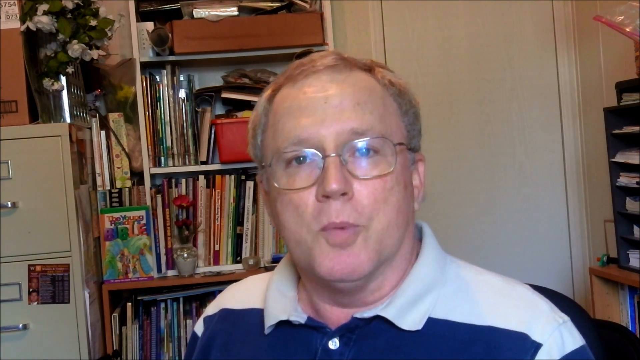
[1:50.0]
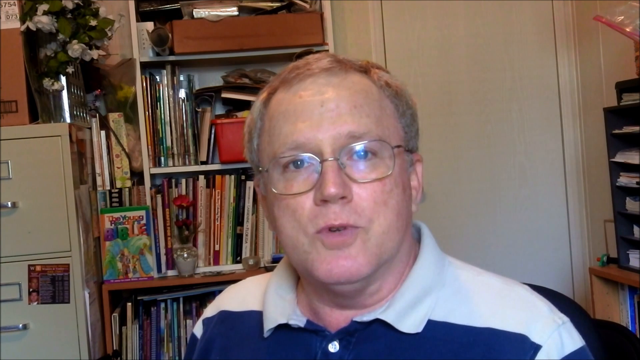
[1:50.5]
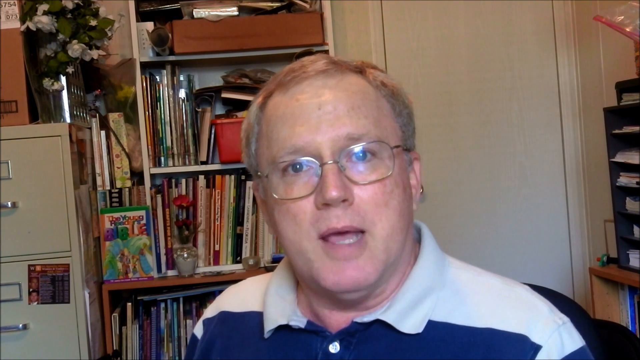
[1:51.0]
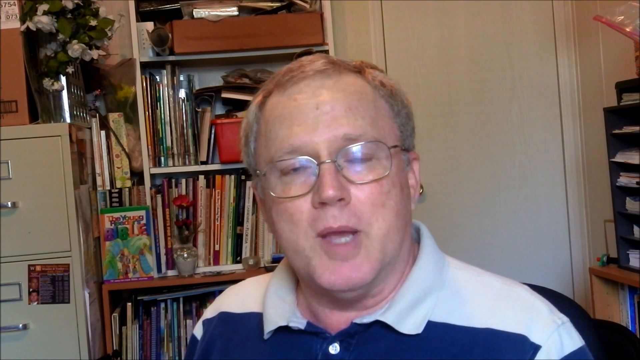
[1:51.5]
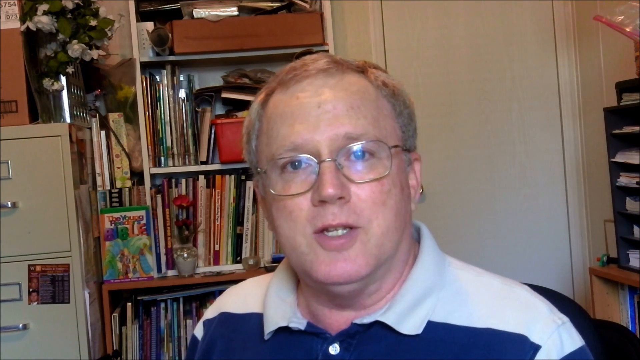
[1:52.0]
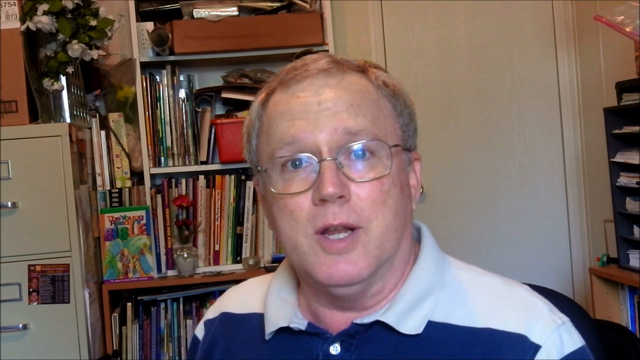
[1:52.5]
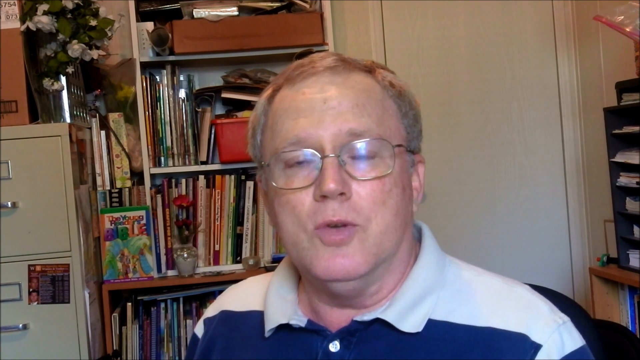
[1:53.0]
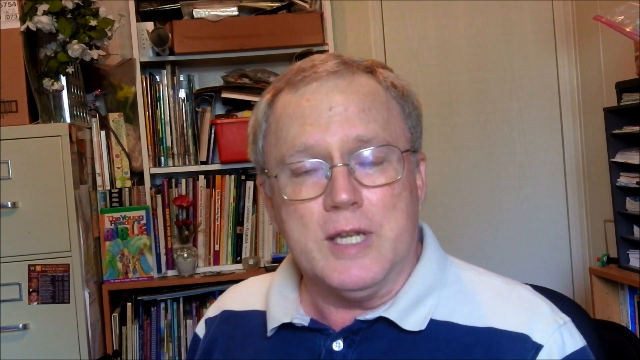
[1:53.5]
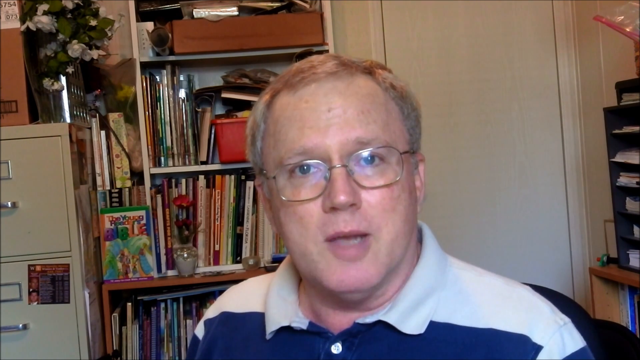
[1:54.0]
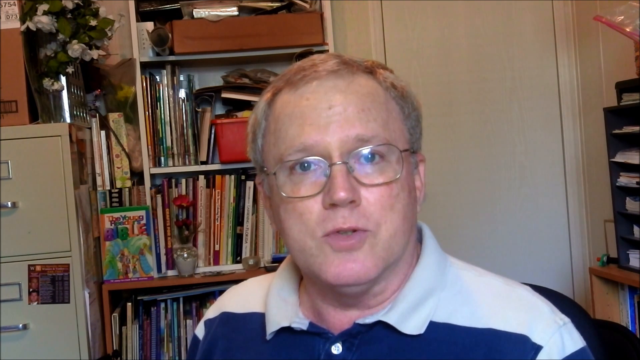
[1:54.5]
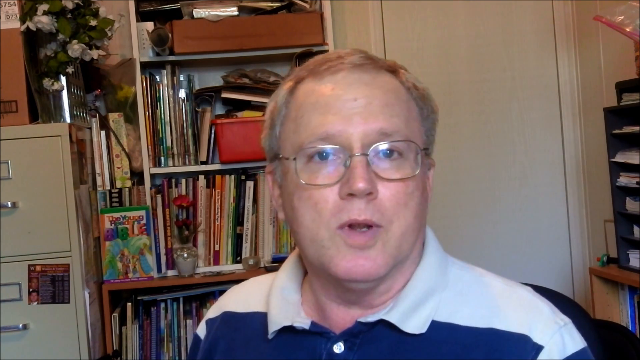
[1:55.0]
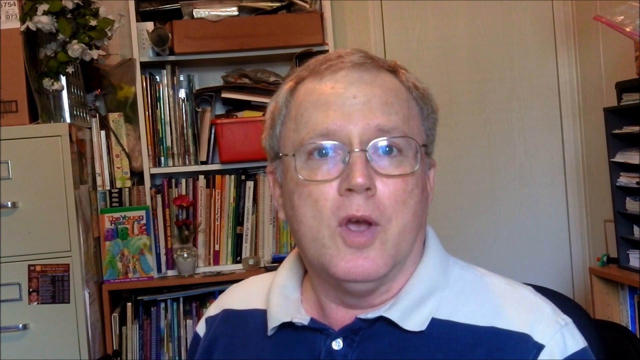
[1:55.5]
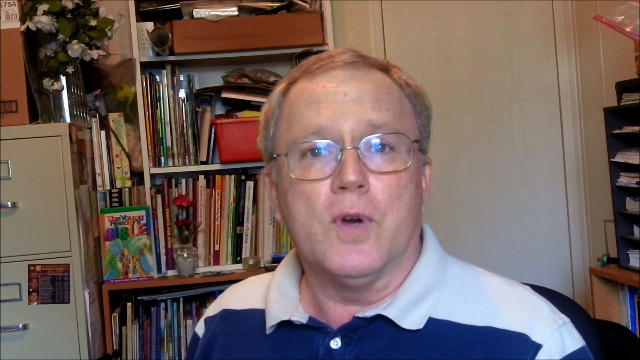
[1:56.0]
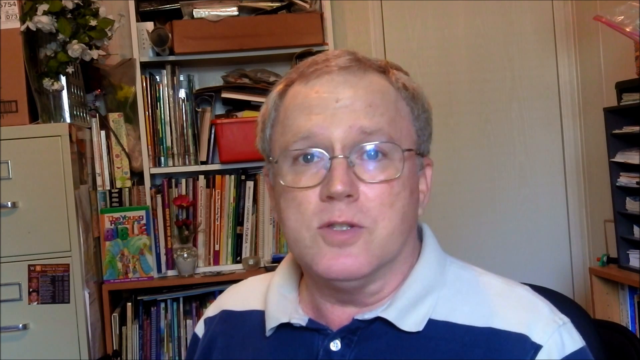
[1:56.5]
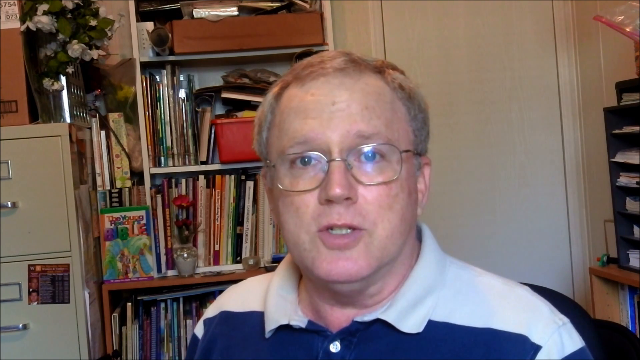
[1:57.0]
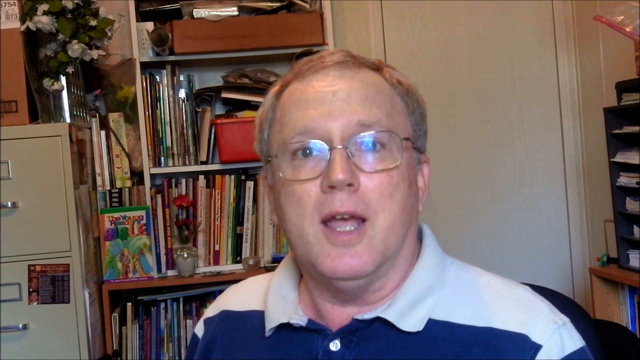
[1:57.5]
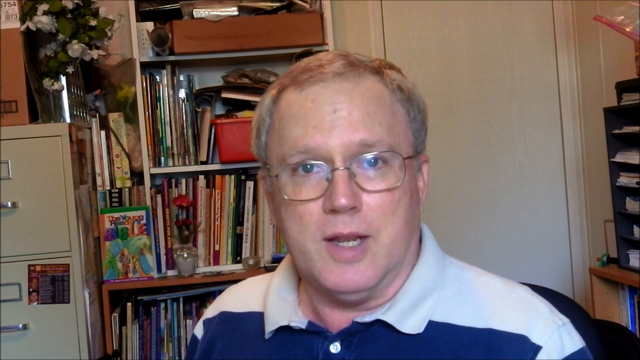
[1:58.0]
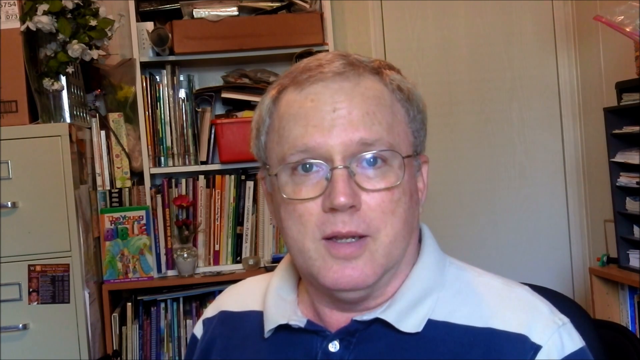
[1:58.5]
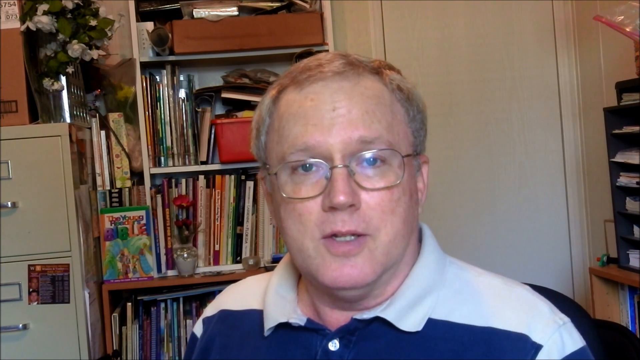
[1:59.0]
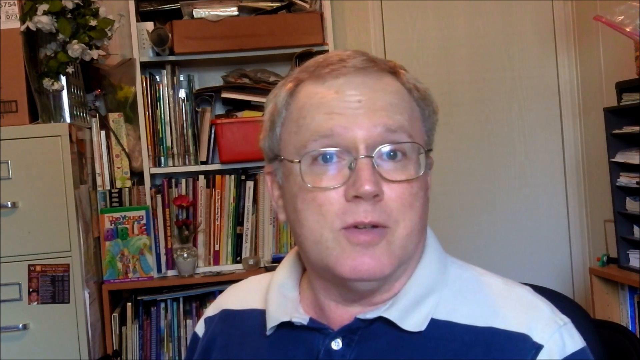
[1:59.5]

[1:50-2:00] A man who appears to be in his 60s sits in the center of the frame wearing a black and white striped polo shirt. His head is tilted slightly to the left, and he is sitting in a black computer chair with an unkempt, cluttered office behind him that includes a file cabinet and a bookshelf lined with books lying sideways among other items. He appears to be in a small office with overhead lighting, as there is a glare on the top of his wire-rimmed glasses. As he speaks, his eyes widen slightly and his eyebrows occasionally lift. He moves his head very slightly and appears to speak slowly, accentuating some words as the muscles at the side of his face tighten and relax. He appears knowledgeable and seems to be instructing the viewer. He does not move from his seated position.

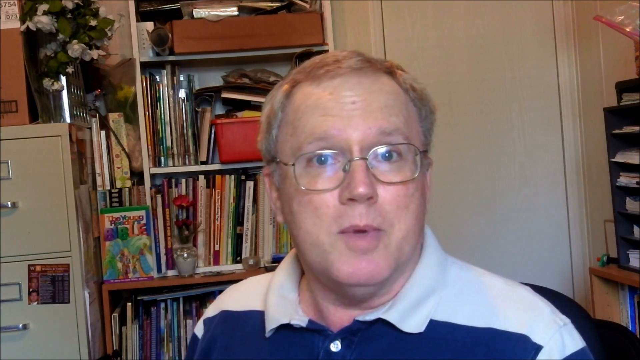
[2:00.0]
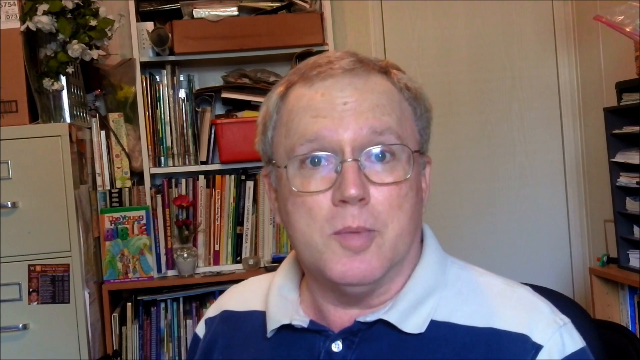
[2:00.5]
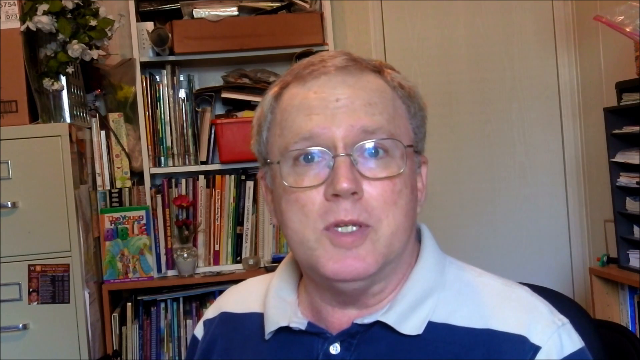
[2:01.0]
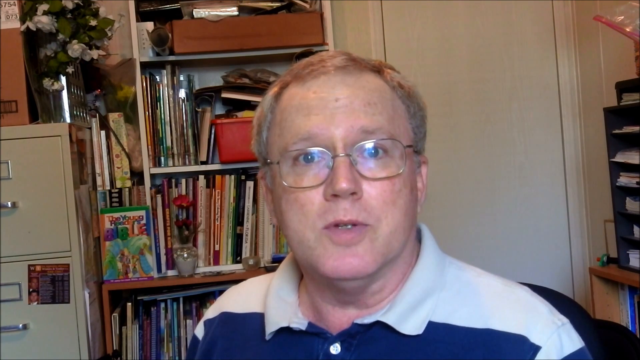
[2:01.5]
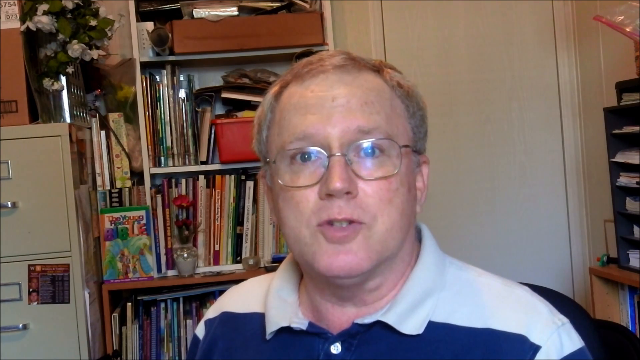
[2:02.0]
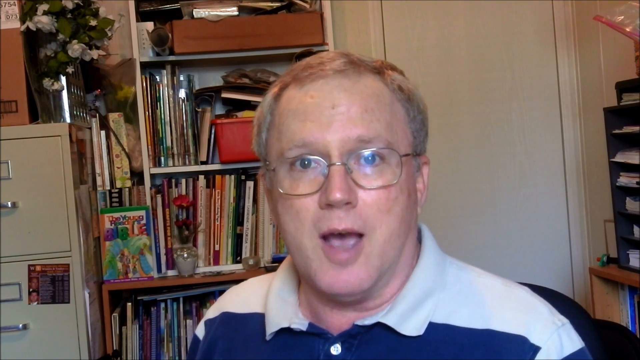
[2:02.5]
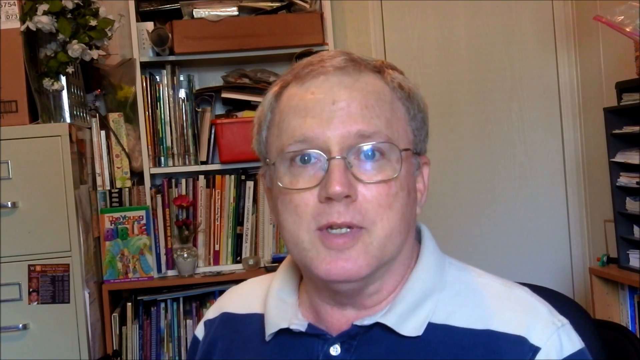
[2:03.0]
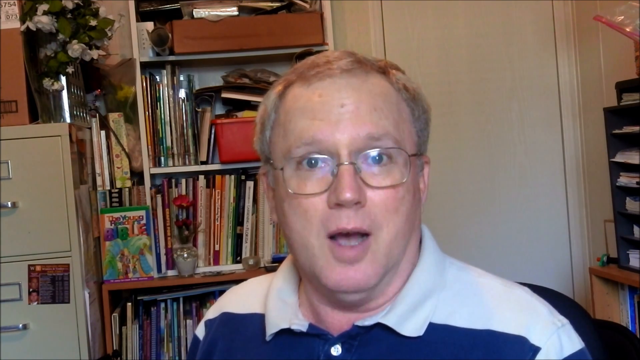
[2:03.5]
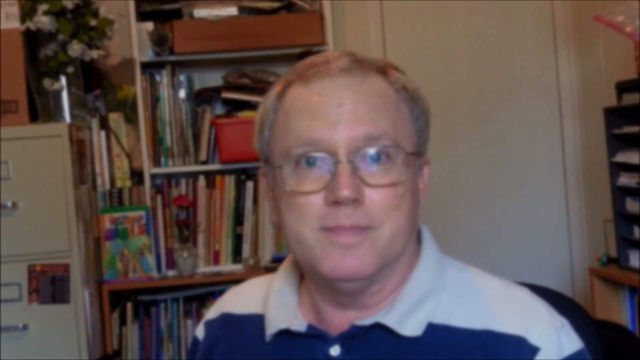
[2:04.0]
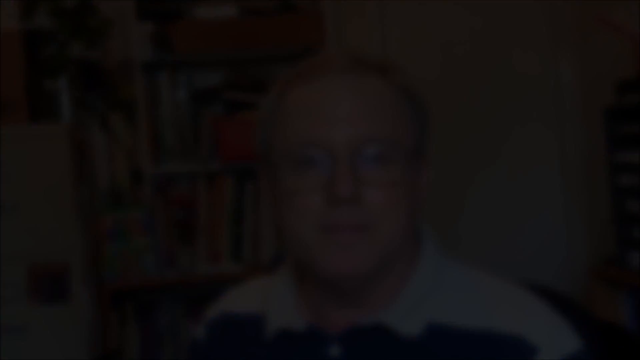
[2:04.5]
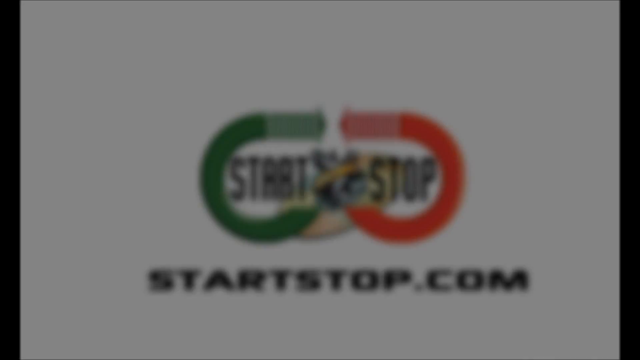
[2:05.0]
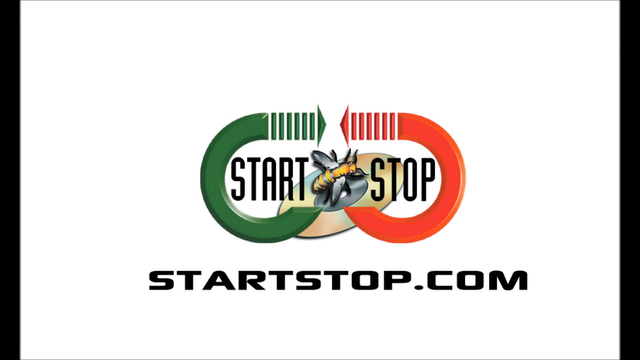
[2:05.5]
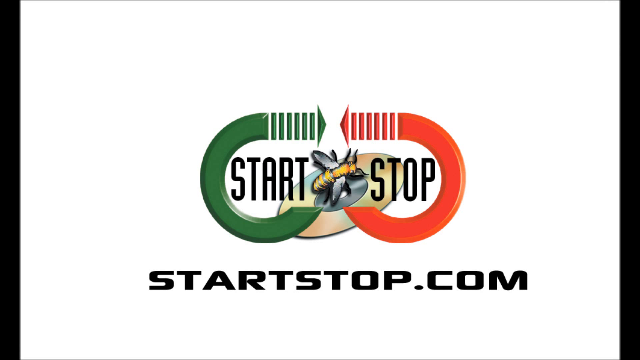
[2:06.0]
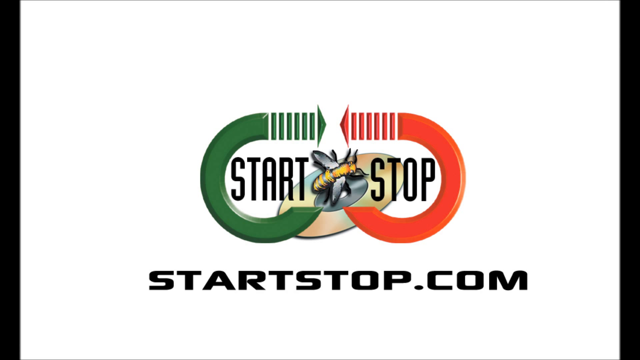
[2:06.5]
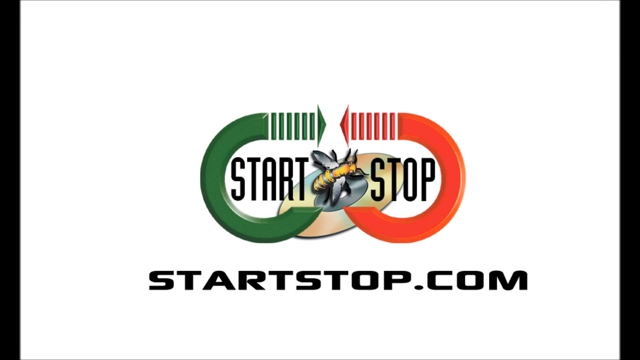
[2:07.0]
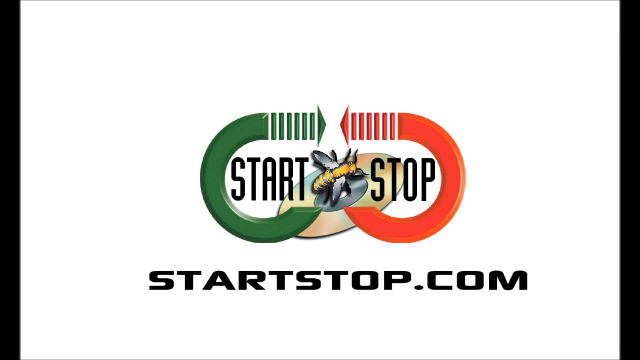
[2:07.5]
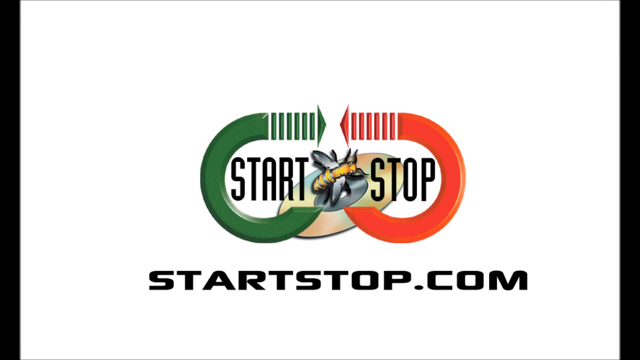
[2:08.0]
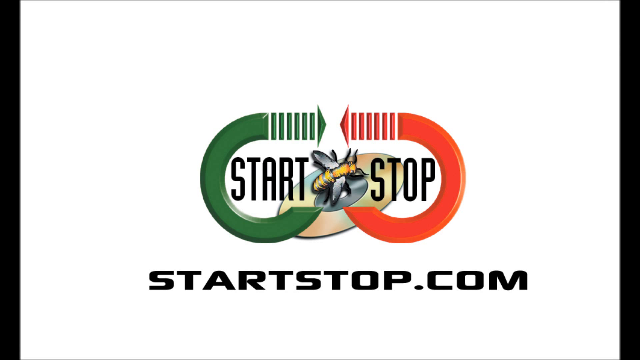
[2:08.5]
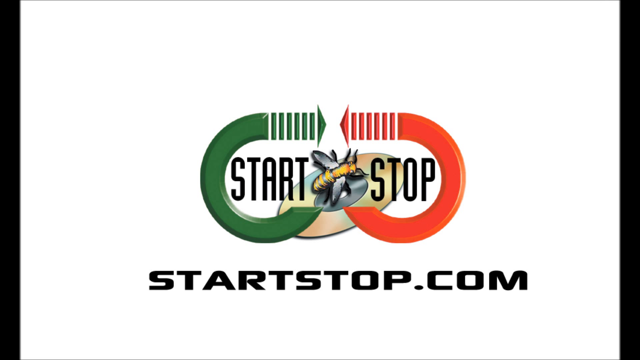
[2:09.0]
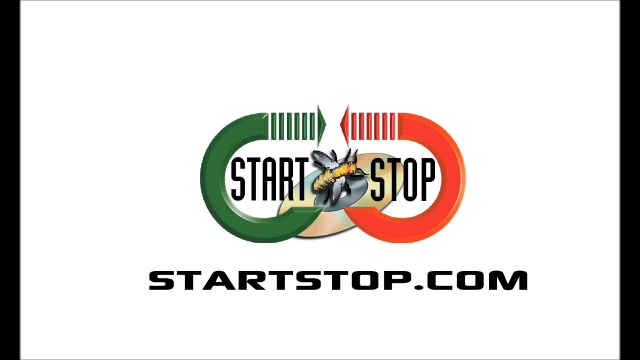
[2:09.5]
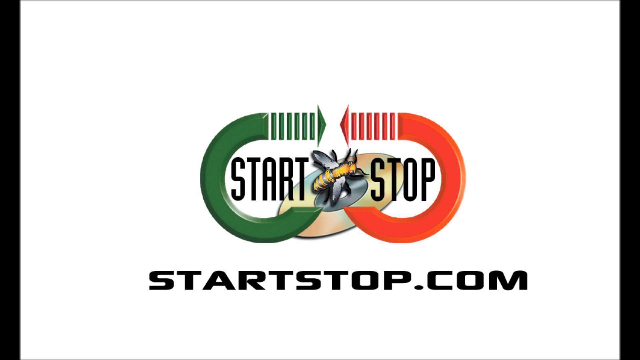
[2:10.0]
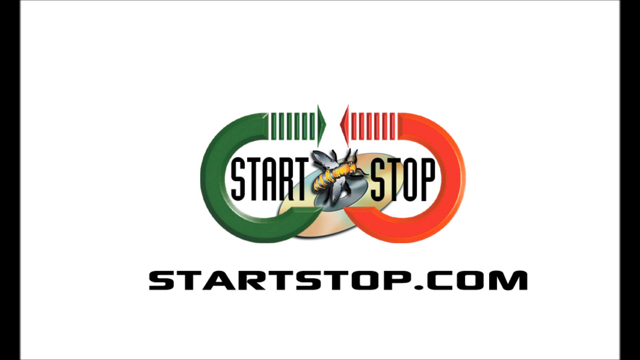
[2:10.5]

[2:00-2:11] A seated man in casual attire in a cluttered office speaks into the camera, nodding slightly. He finishes speaking, and the screen blurs and fades to black. From the black screen, the START STOP logo appears on a white background, centered, with the bee sitting on a compact disc that is slightly tilted to the left. The word START is to the left of the bee and STOP to the right, in tall black text. A letter C shaped like an arrow, pointing toward the right, surrounds START, and a red backwards C shaped like an arrow, pointing toward the left, surrounds STOP. Underneath, with some space between it and the logo, is "STARTSTOP.COM" in bold black font that is shorter than the text in the logo.